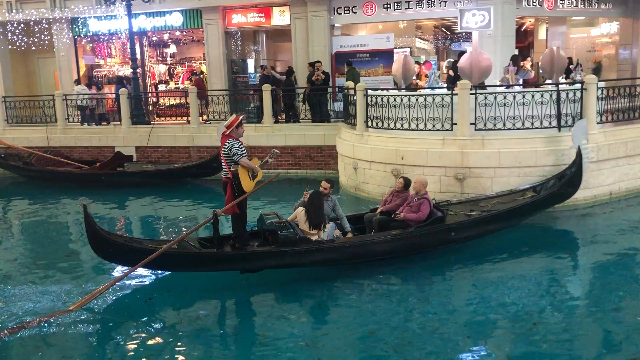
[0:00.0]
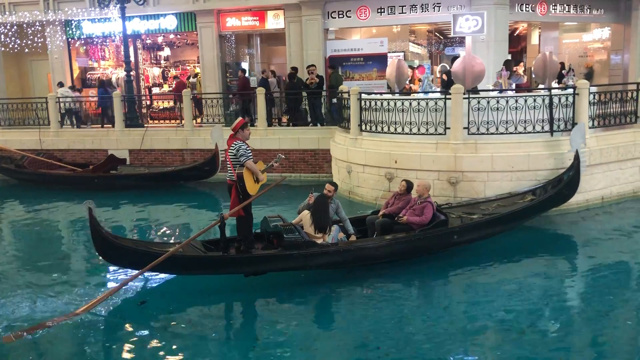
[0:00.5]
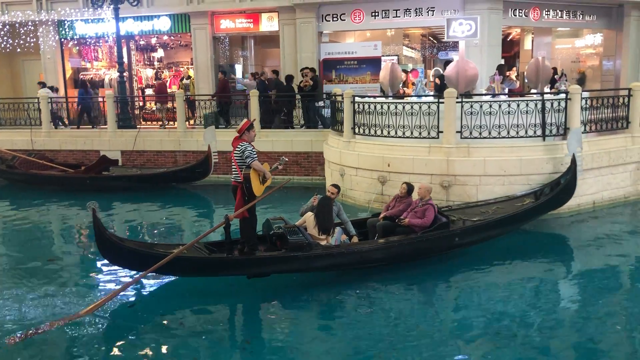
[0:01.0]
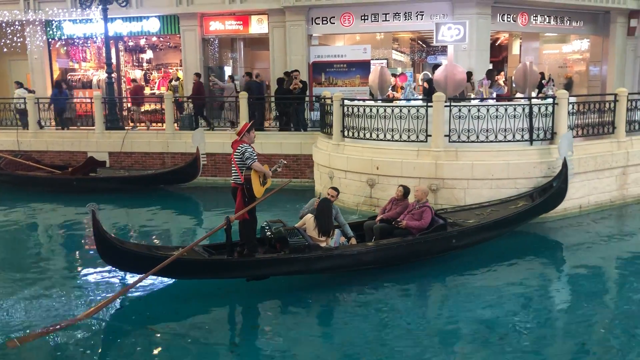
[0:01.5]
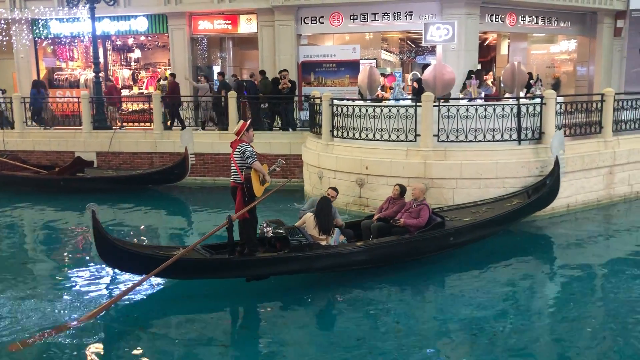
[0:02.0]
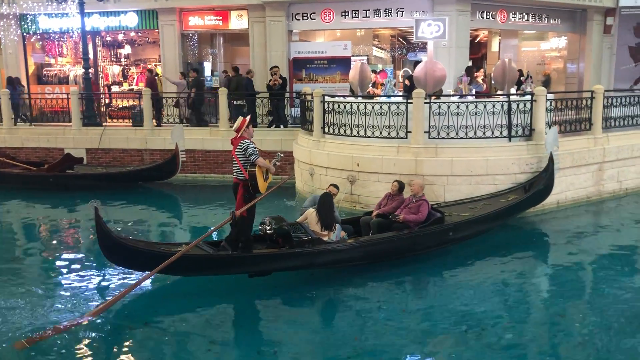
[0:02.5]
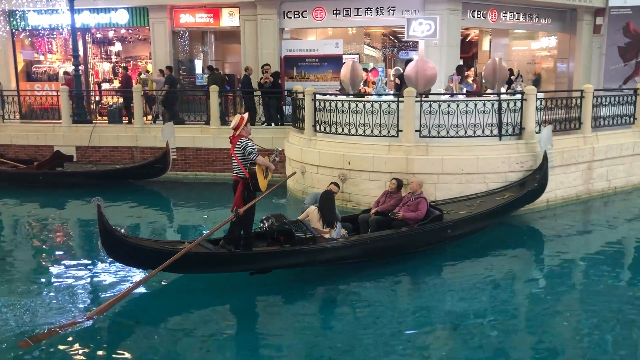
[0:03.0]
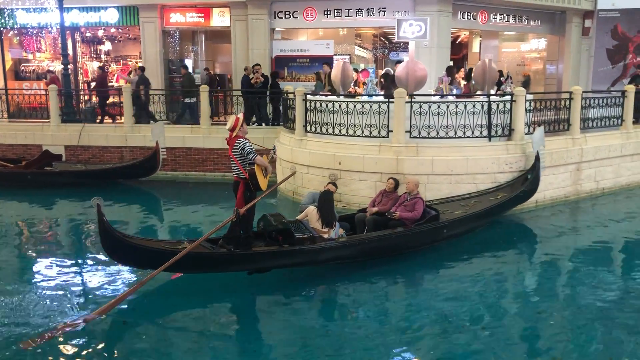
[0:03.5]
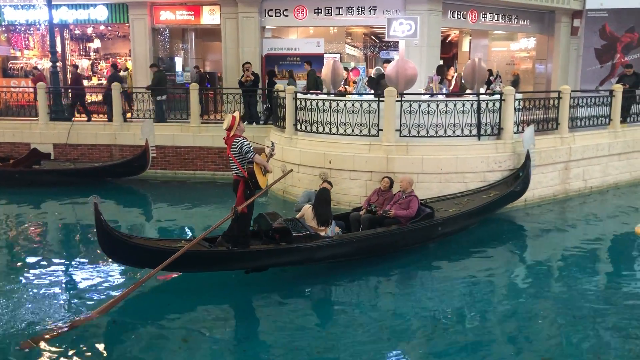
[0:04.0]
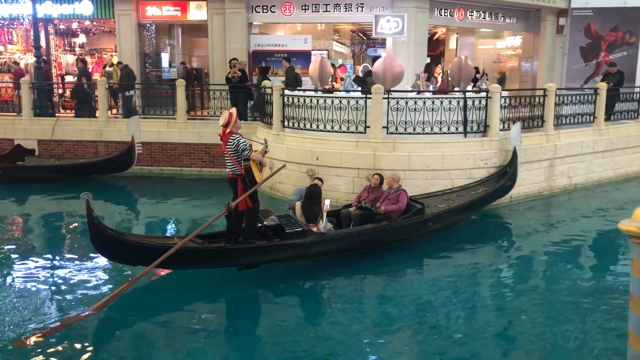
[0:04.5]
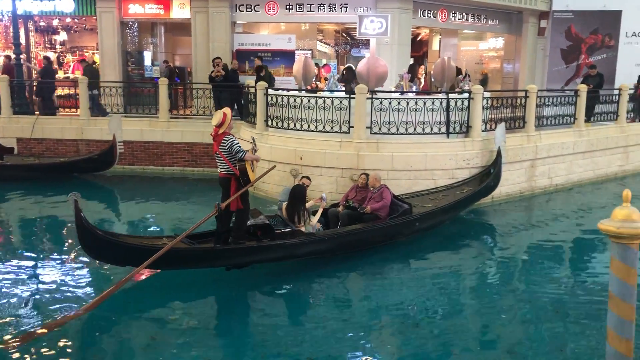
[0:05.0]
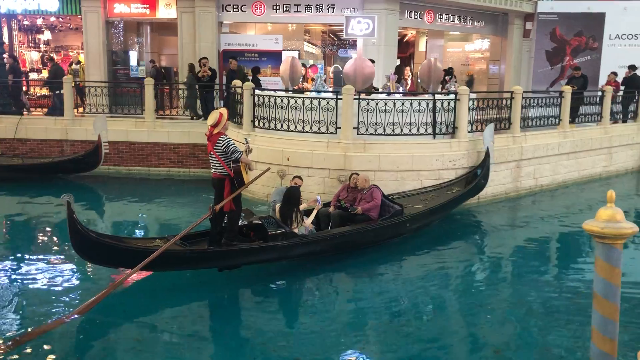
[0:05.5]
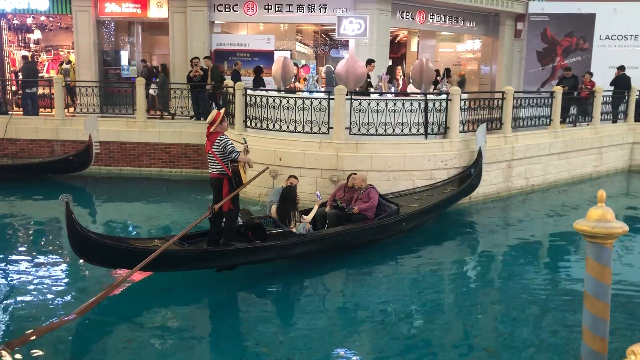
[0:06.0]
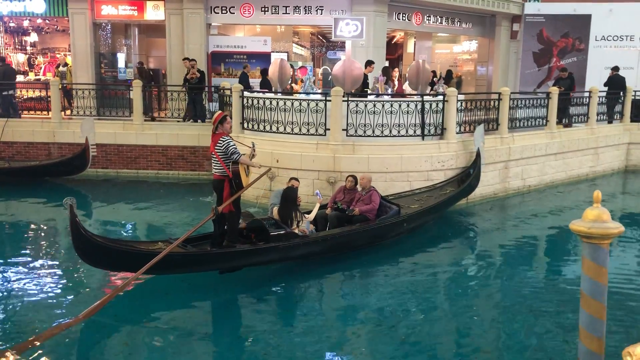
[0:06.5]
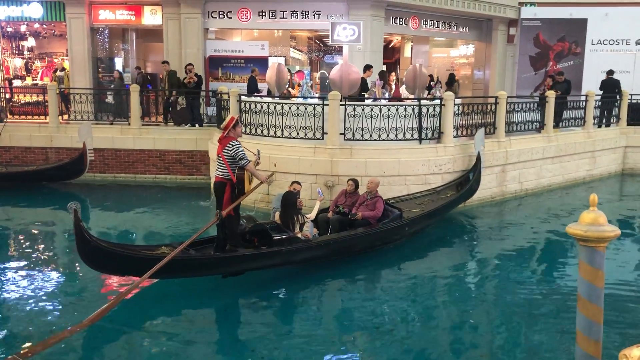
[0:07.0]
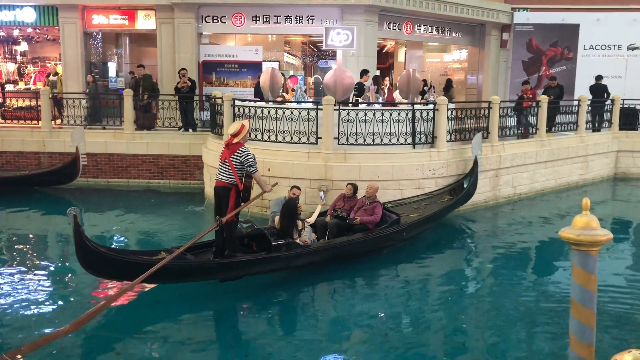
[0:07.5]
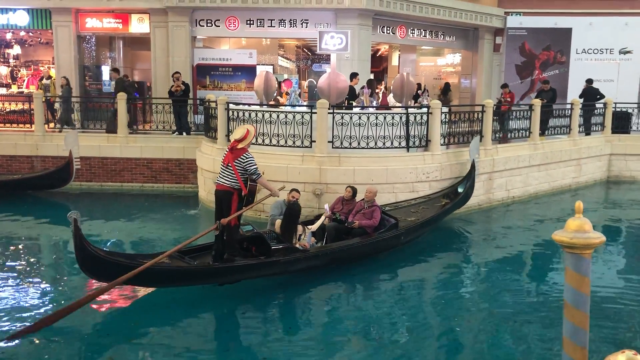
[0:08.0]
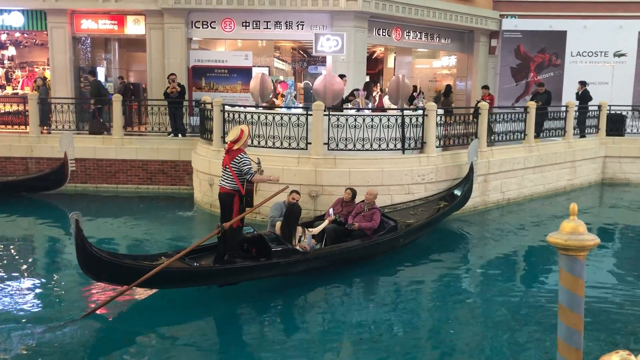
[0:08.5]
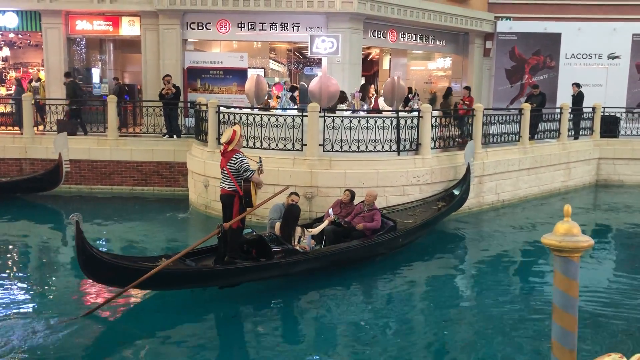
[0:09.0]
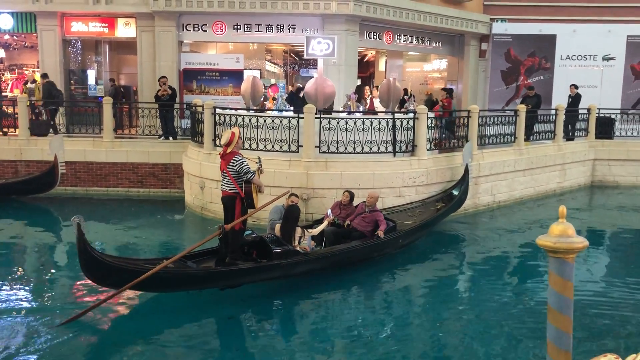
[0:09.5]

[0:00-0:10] A gondola scene that could well be in Venice. A black gondola with two upturned ends has a gondolier at the stern playing a guitar. He wears a stripy top, dark trousers, a red sash across his top, and a straw boater with a red ribbon tied around it. His pole is lodged to the side as he plays. He is playing to four people in the gondola: two of them face the camera and two have their backs to it. In the background is a shopping area with a curved, semi-circular section, which is where the gondola is stopped. A number of shops with their lights on are visible, several people wander around, and a Lacoste logo appears in the background.